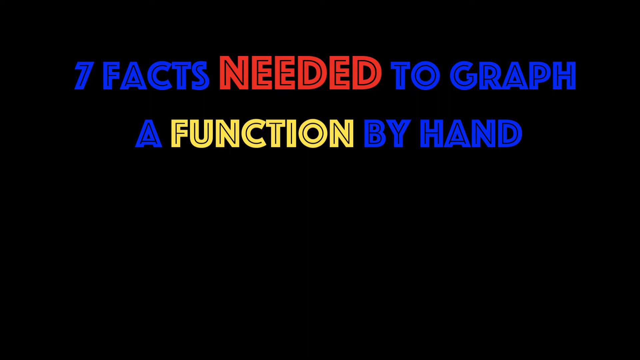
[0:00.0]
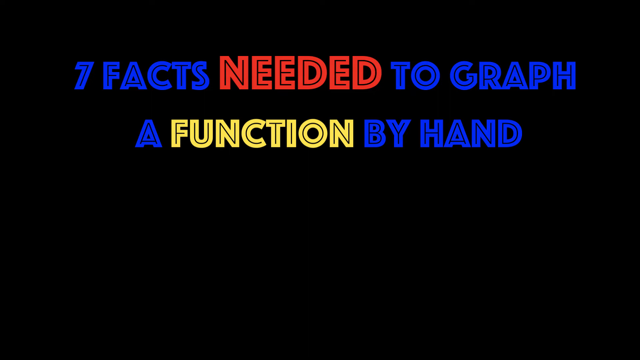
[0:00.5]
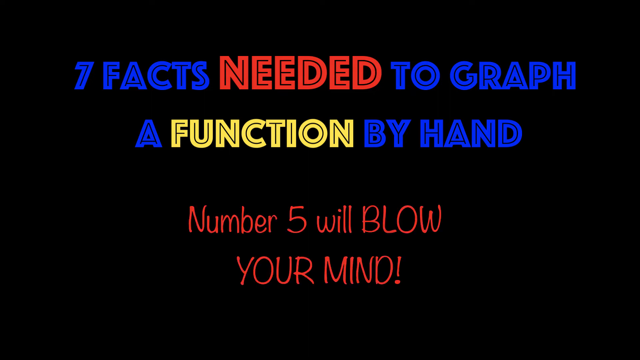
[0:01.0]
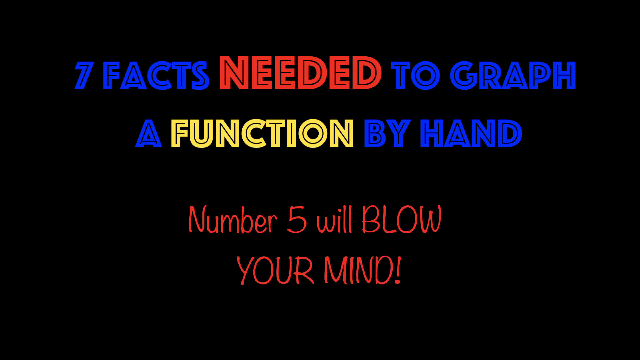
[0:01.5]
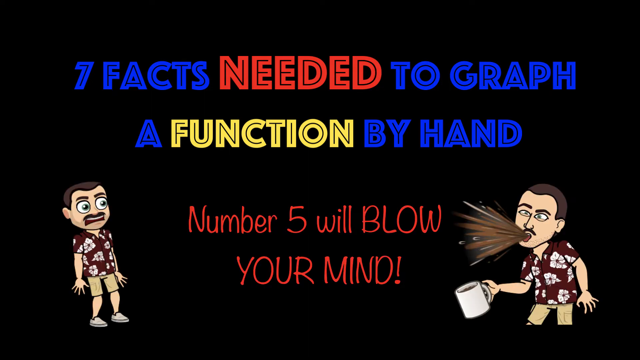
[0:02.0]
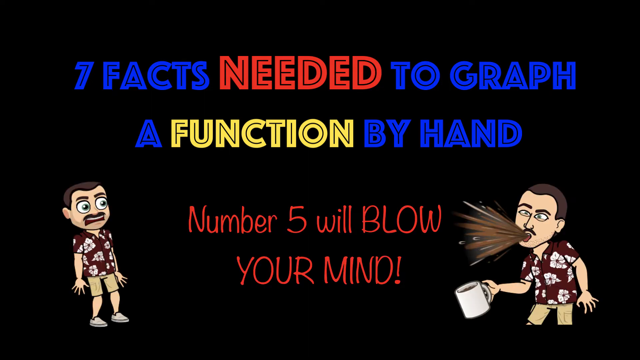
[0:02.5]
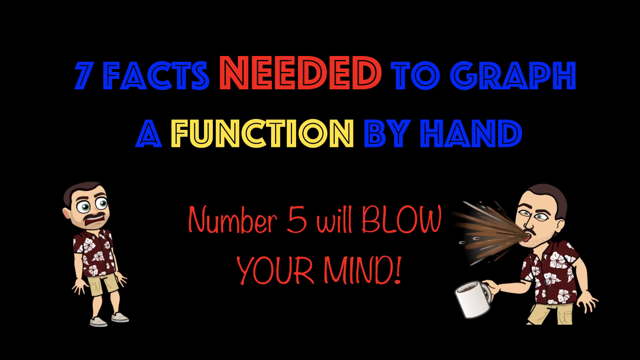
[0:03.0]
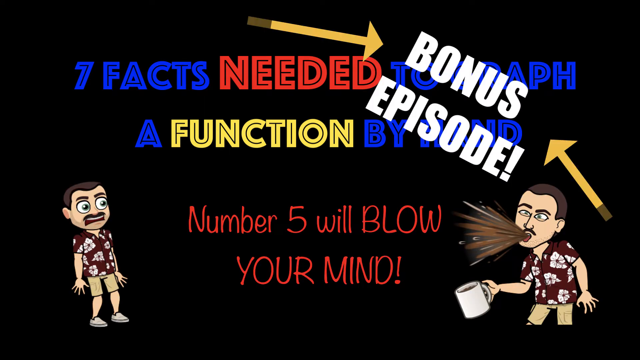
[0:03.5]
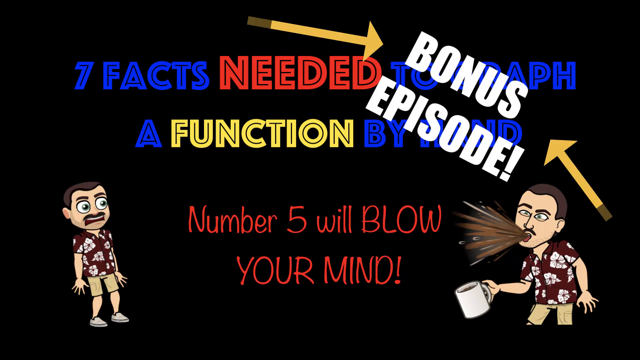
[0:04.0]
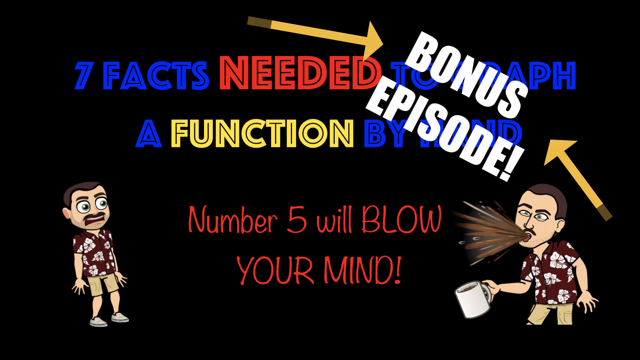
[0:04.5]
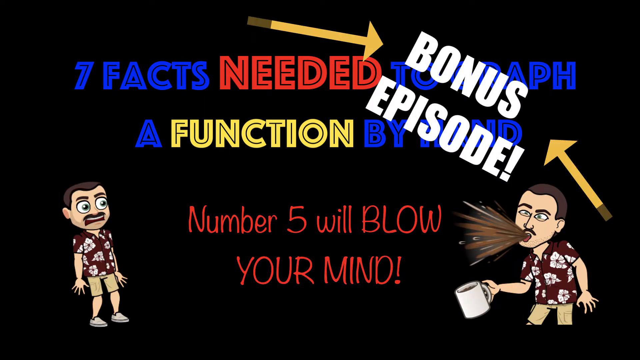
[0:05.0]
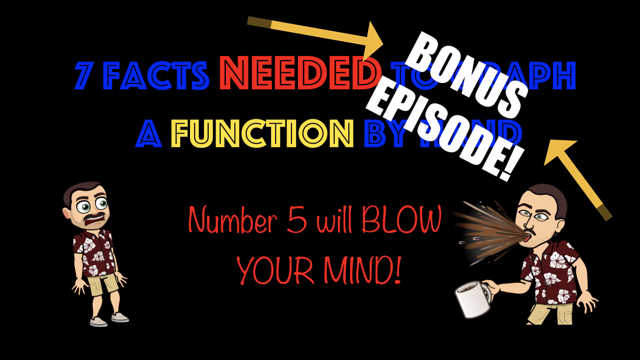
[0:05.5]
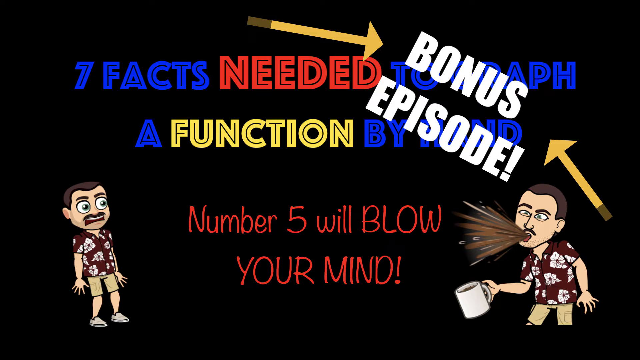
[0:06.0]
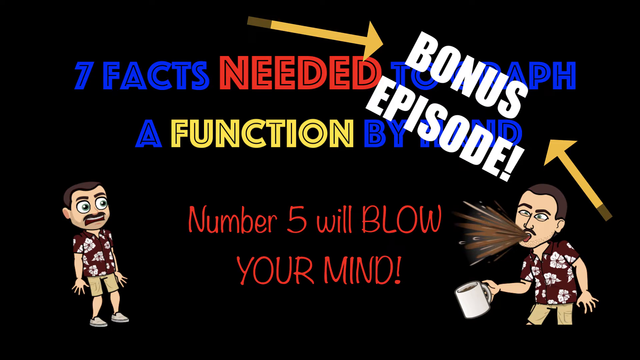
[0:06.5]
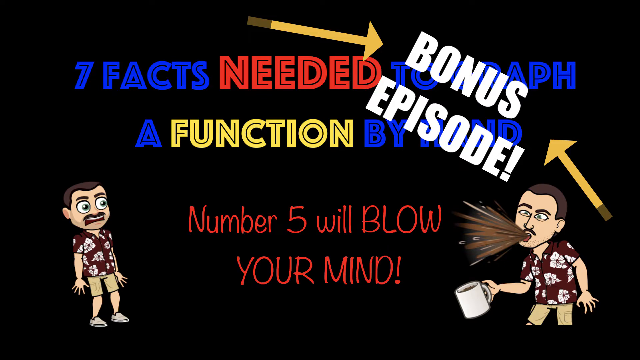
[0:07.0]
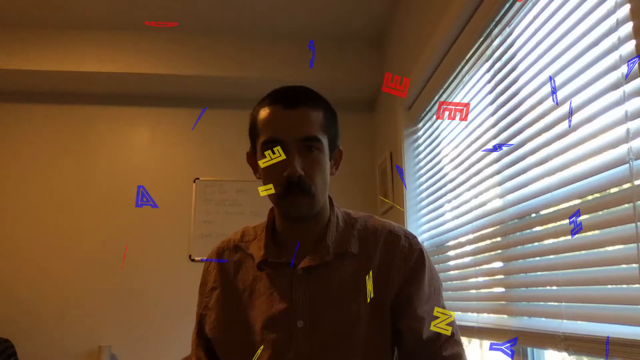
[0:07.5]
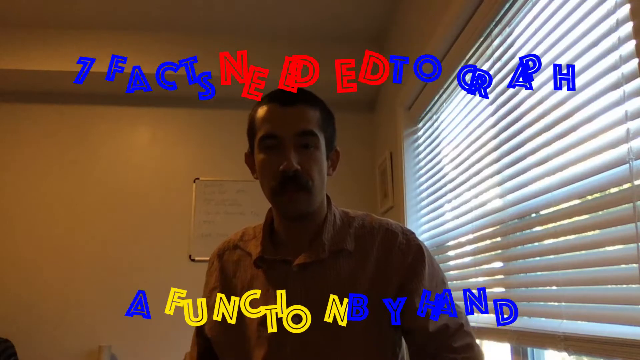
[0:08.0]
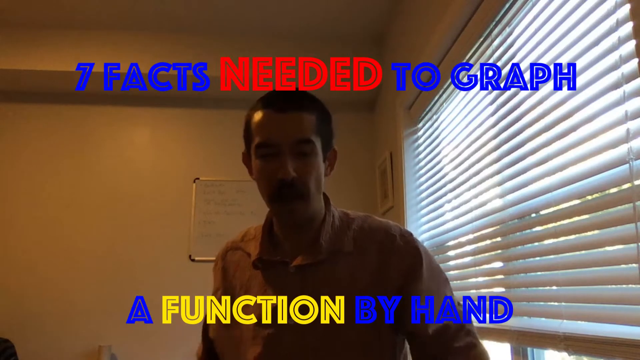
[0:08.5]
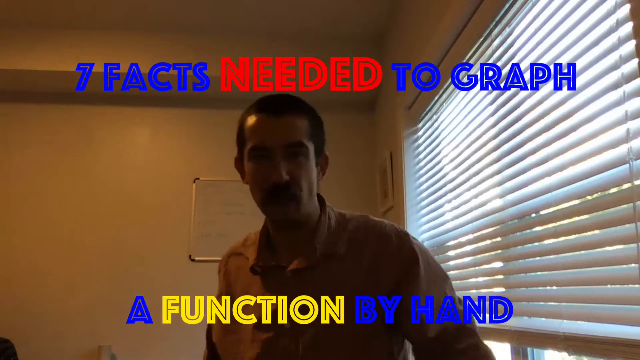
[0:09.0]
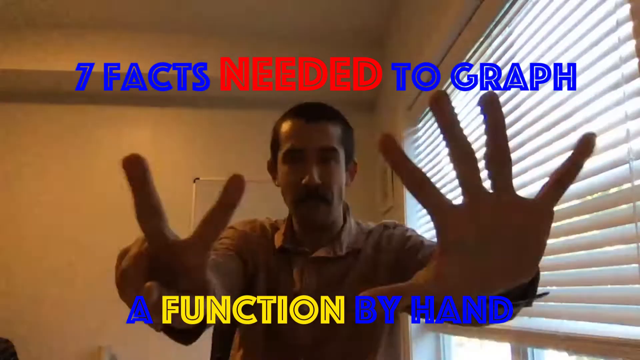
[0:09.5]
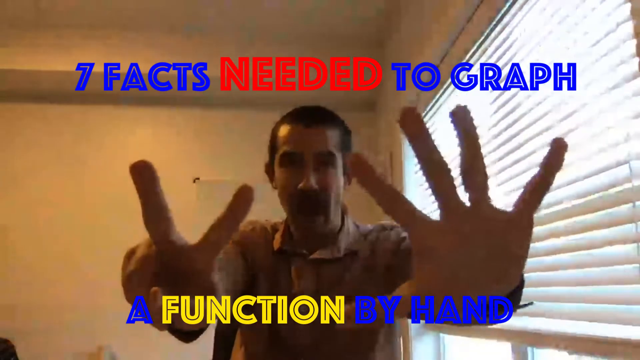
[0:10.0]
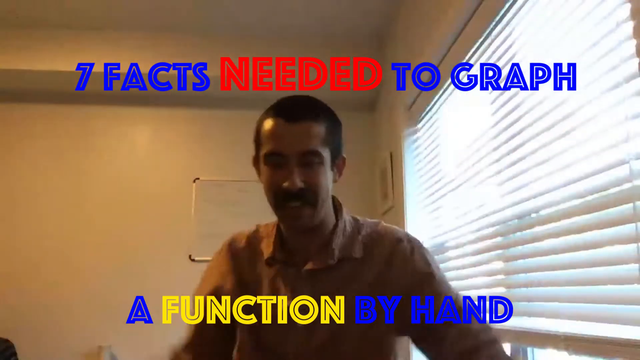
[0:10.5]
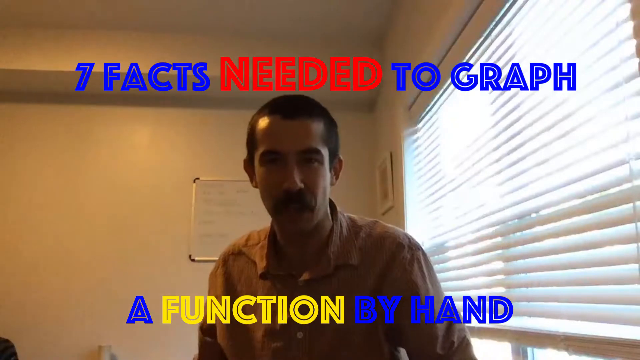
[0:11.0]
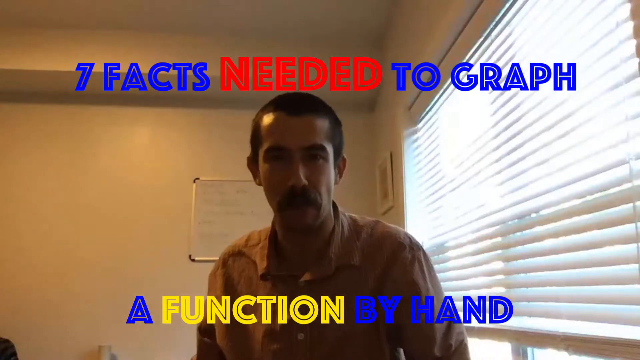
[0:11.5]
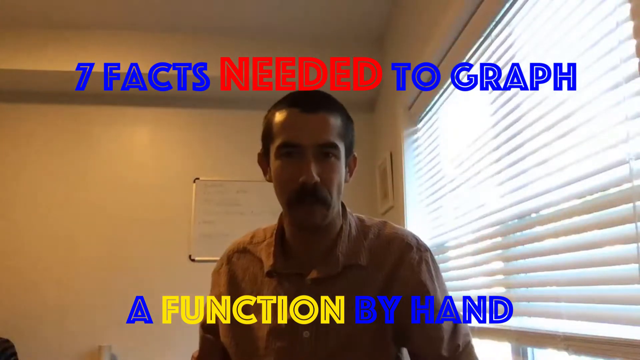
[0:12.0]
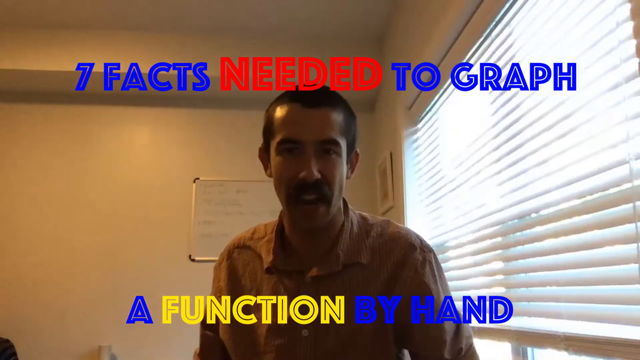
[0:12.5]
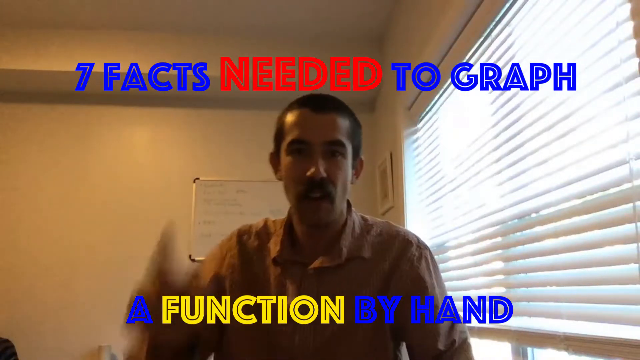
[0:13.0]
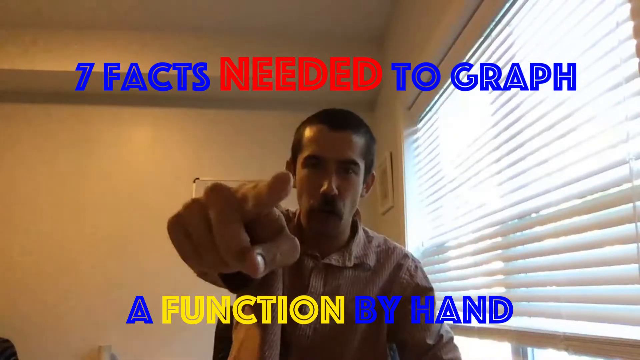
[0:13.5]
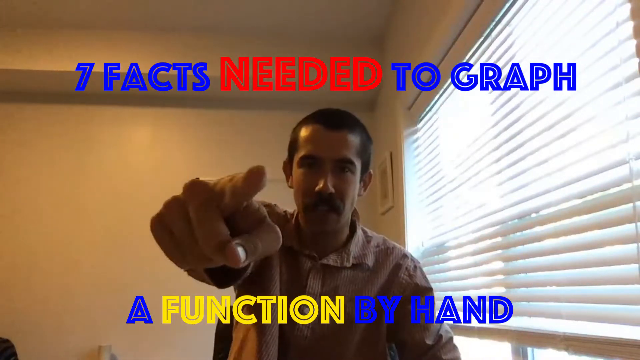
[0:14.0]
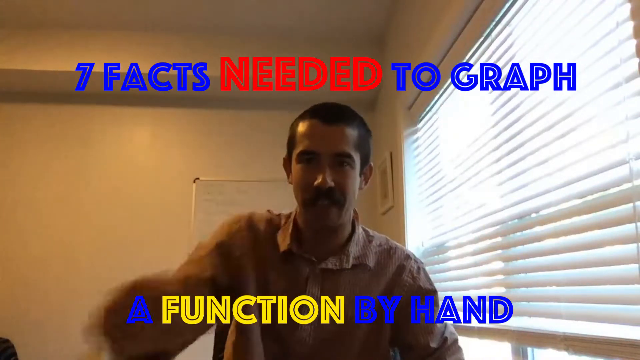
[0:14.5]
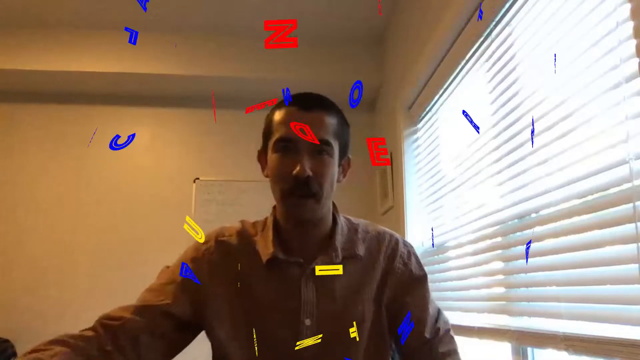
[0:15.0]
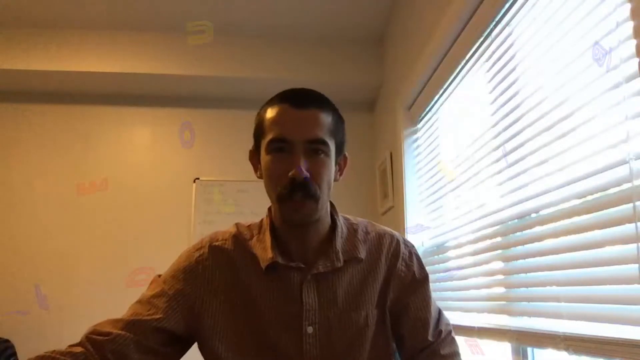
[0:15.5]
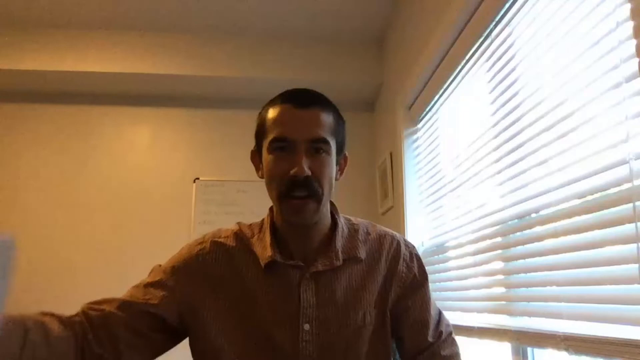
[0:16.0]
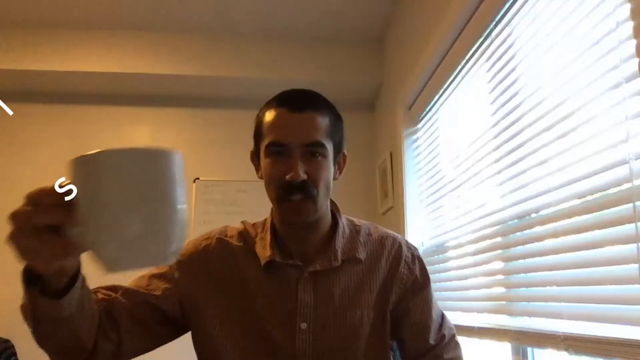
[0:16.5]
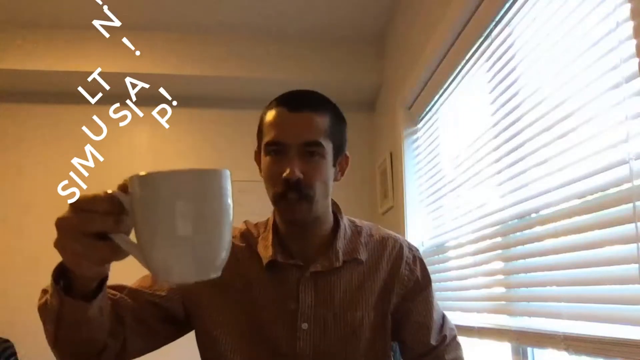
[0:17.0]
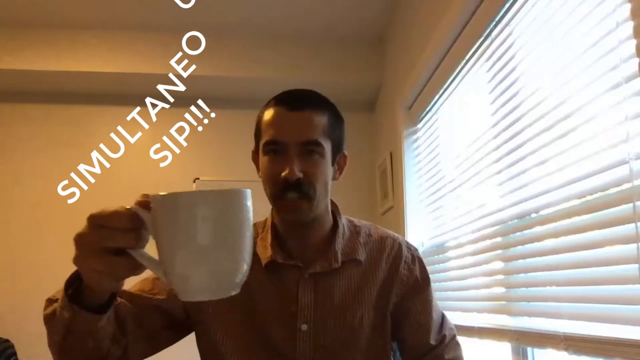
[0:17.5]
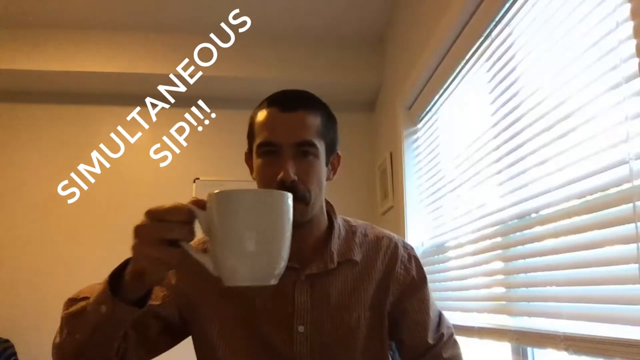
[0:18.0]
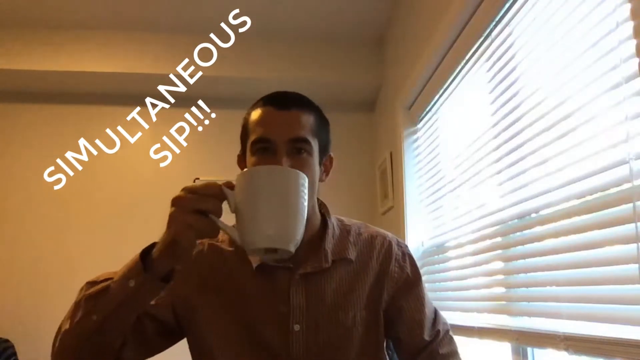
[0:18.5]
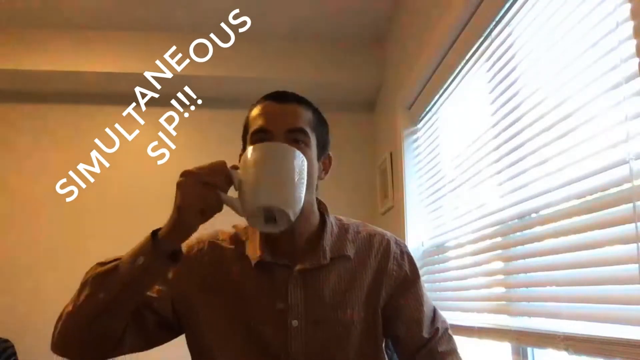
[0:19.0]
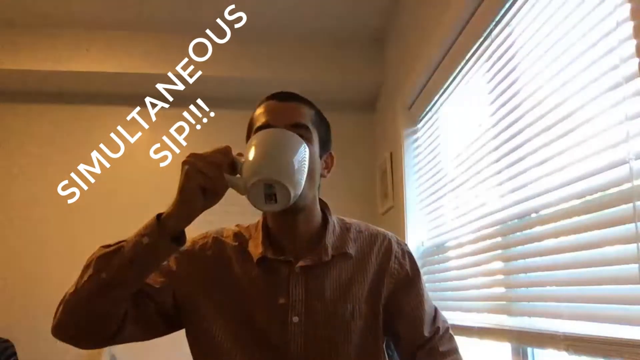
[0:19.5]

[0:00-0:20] On a black background appear the words "seven facts needed to graph a function by hand." The words on the left side are blue and the words on the right side are blue; the top word is red and the bottom word is yellow. At the bottom, in red, it says "number five will blow your mind." To the left is a cartoonish figure of a man in a Hawaiian shirt and khaki shorts, with brown hair and a brown mustache, who looks to his right, surprised. On the right side is the same man, this time spitting out a cup of coffee he was drinking, holding the cup in his right hand. The words "bonus episode" then appear in white in the top right, with two yellow arrows pointing at them. The scene transitions to a man in a Hawaiian shirt with a brown mustache and brown hair, showing five fingers with his left hand and two with his right. At the top it says "seven facts needed to graph" and at the bottom "a function by hand." The man begins talking toward the camera; white blinds are to his left and a white board is behind him. He points at the camera with his right index finger. The words then scatter and disappear from the video. With his right hand he grabs a white cup of coffee, raises it in a cheers and begins to drink, as the words "simultaneous sip" appear at the top left.